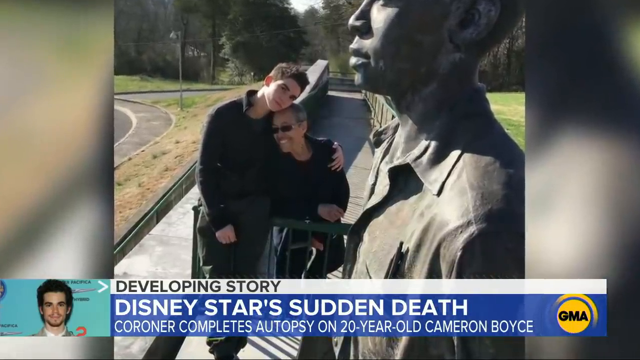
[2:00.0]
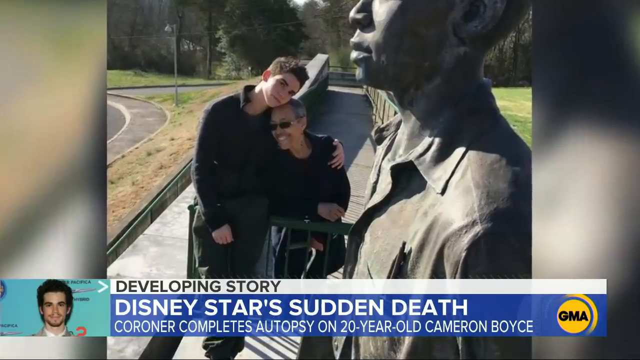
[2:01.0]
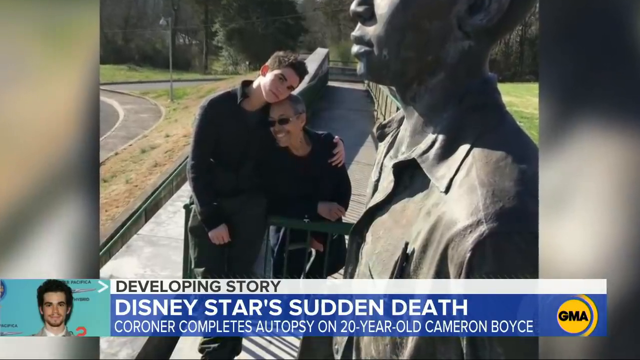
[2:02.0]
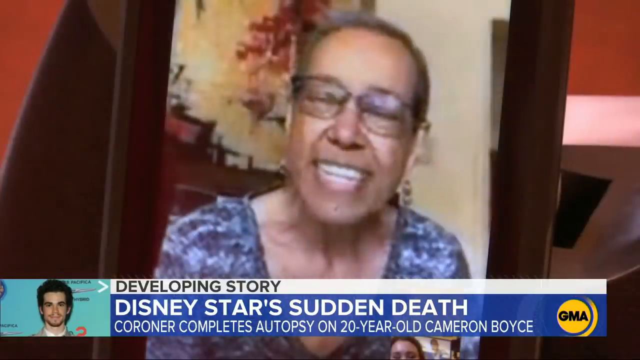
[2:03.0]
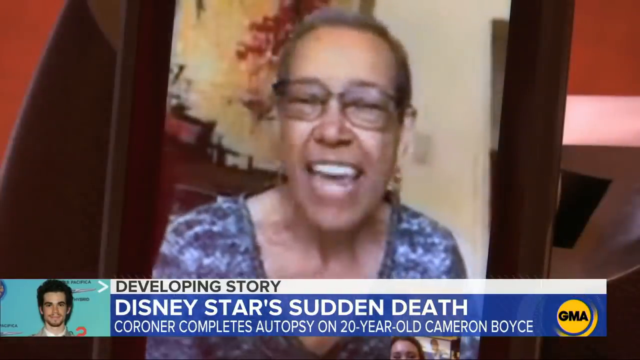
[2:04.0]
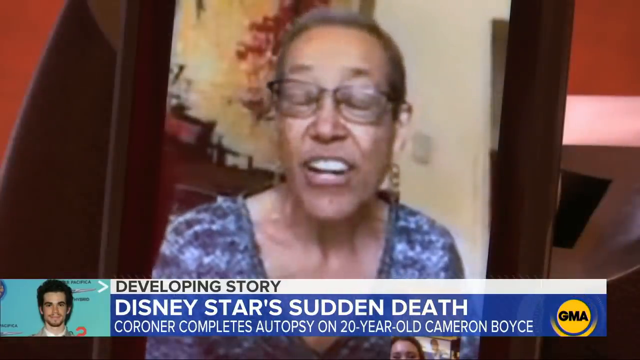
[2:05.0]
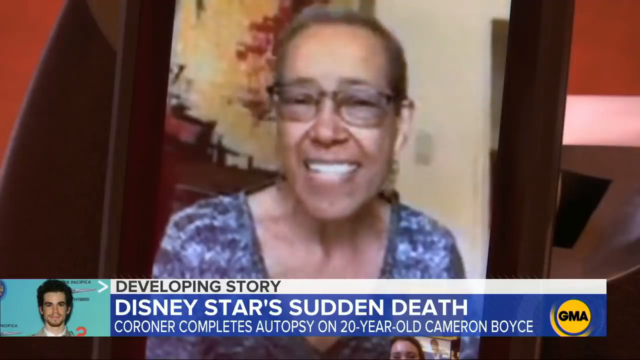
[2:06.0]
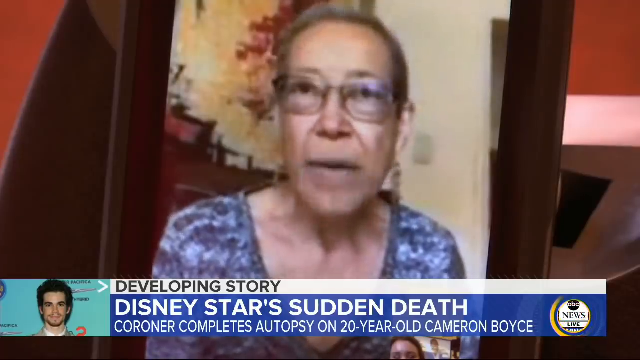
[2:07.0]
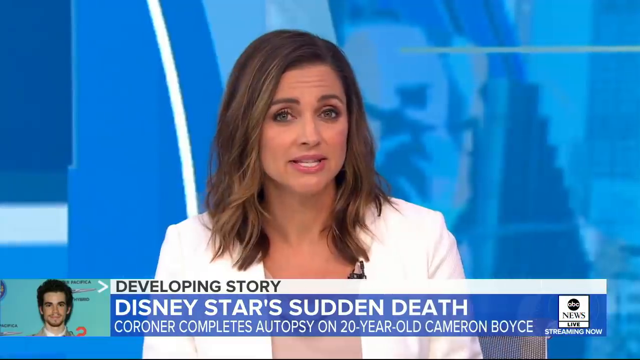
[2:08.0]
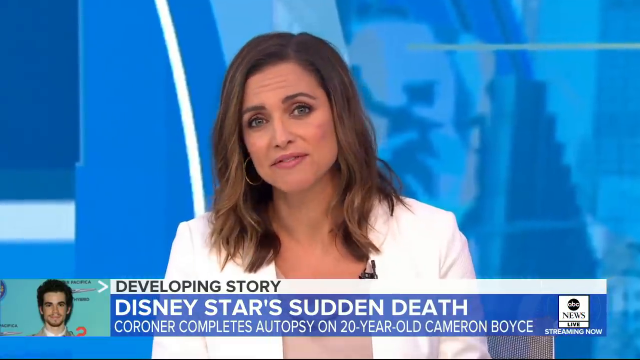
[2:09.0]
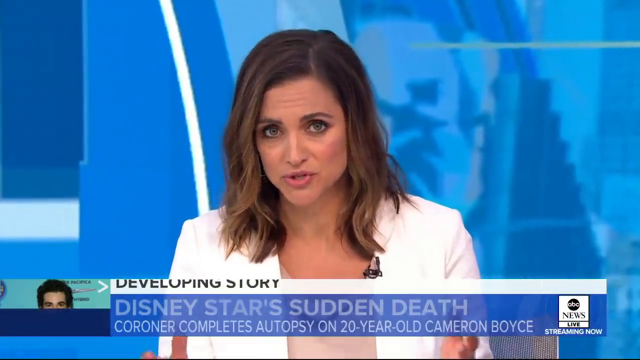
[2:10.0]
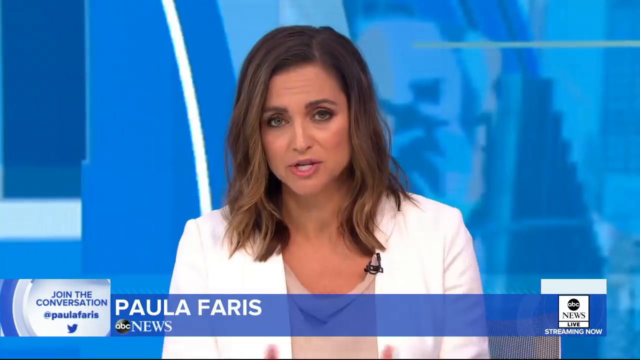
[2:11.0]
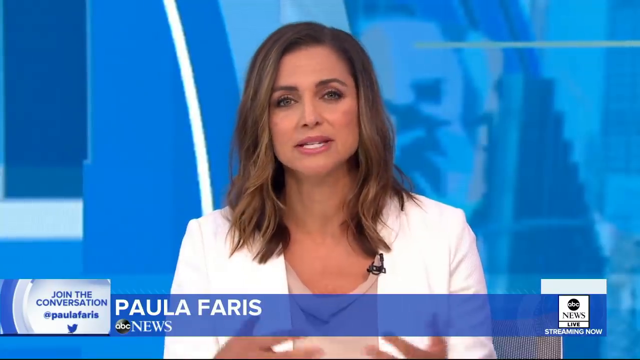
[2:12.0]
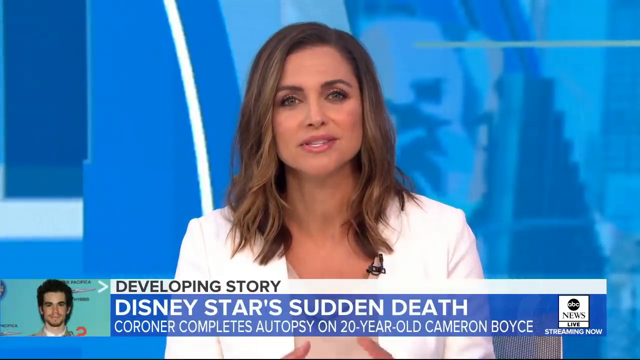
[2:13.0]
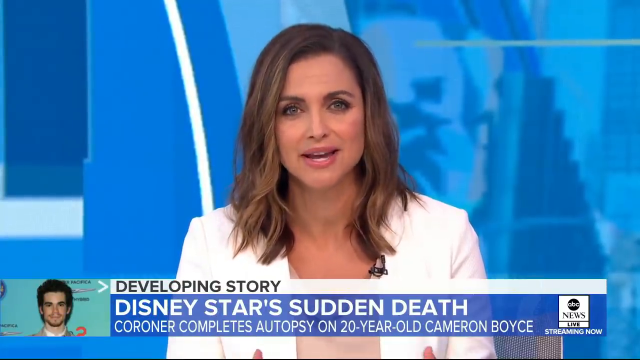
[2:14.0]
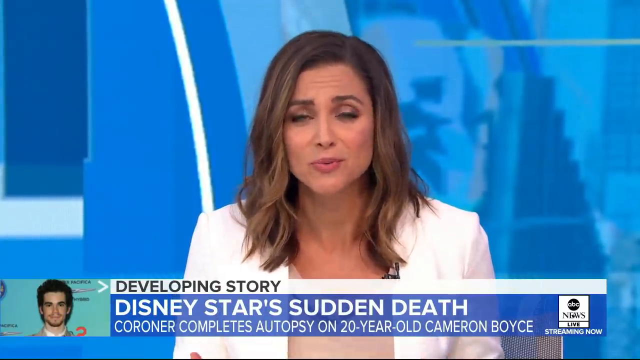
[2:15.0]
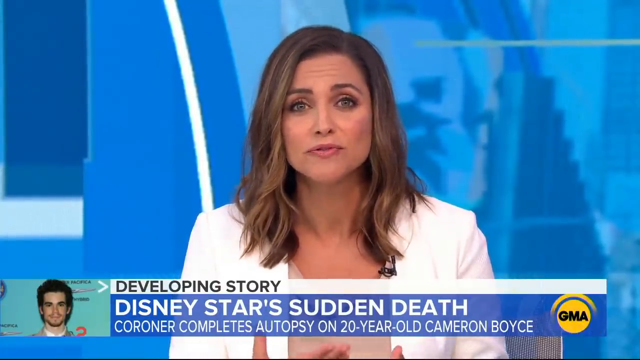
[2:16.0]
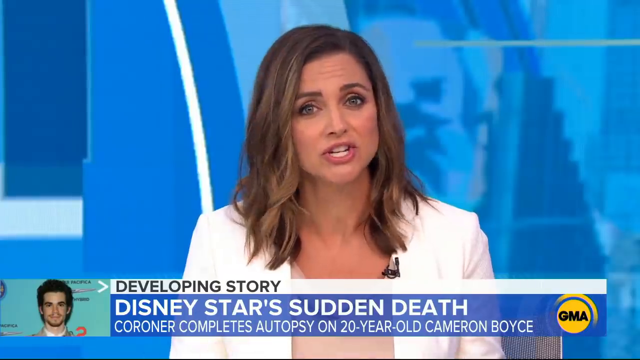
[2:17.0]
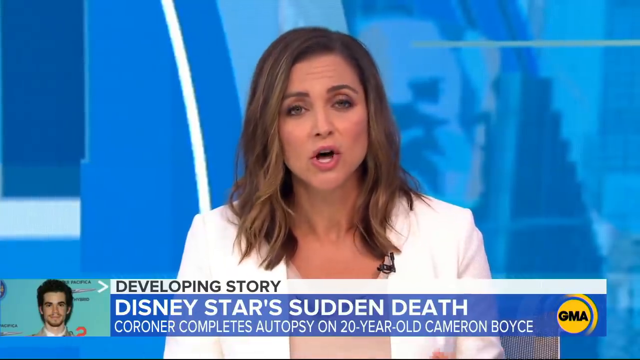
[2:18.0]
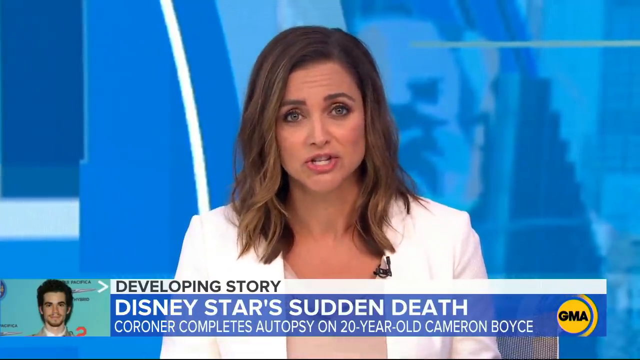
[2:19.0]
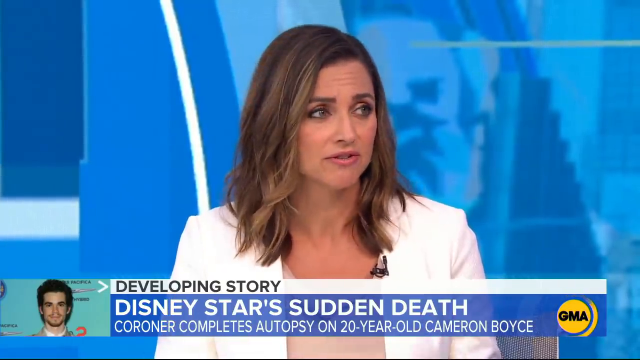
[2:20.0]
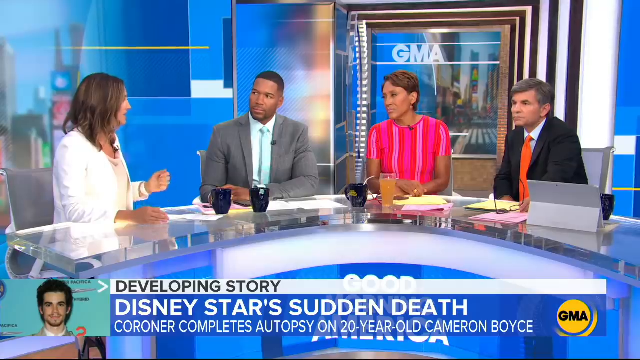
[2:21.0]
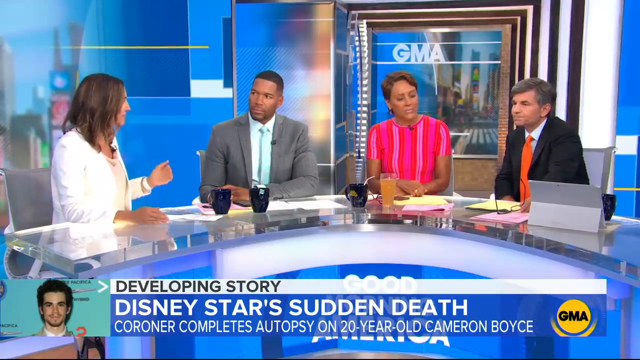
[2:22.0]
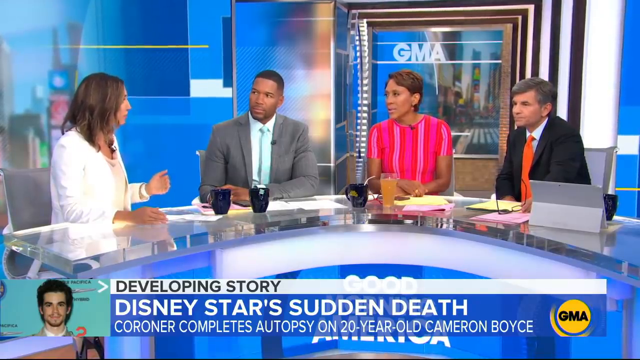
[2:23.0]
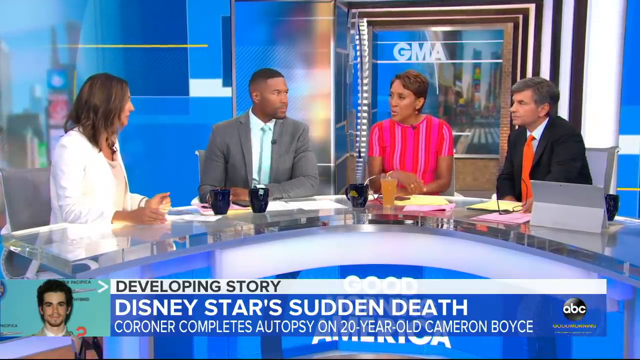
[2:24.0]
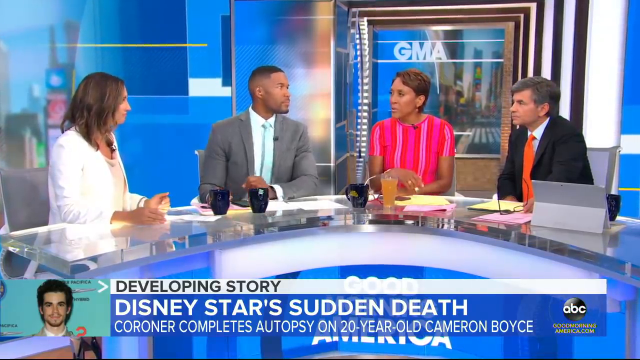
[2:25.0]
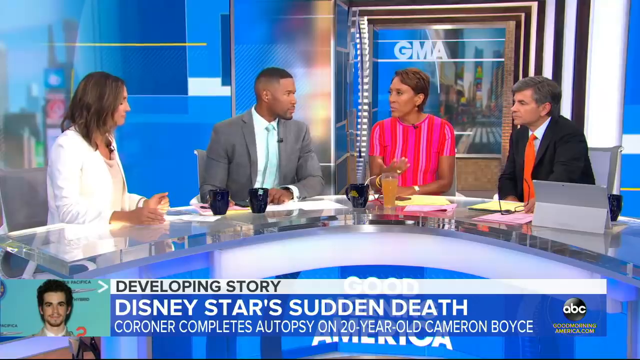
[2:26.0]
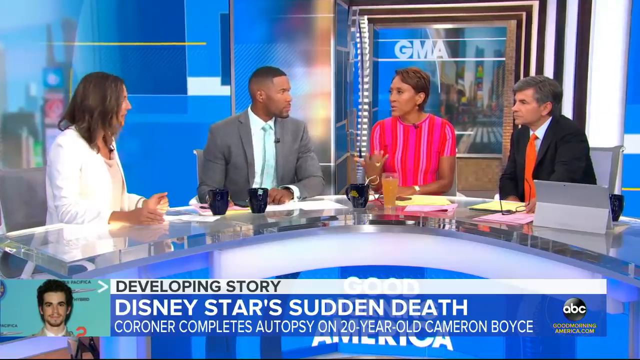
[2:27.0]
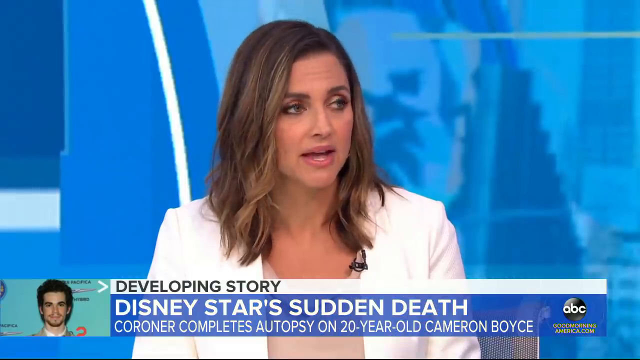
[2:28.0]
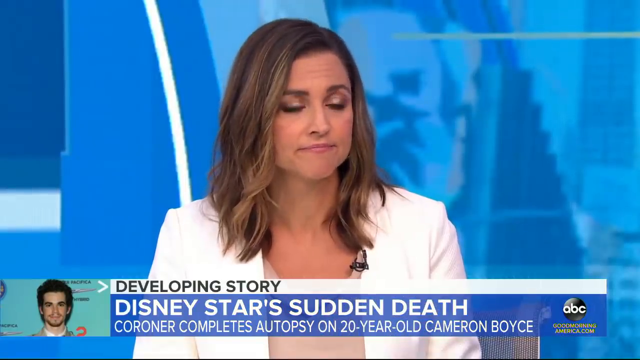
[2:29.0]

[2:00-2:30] The photo of his mom and Cameron Boyce continues, with Cameron Boyce holding onto his mom's left shoulder with his left arm while resting his head on her head. The video recording or call with the mom, or possibly the grandmother, is shown again; she smiles as she speaks. The next shot shows the news presenter speaking again, visible only from the chest up, in the white blazer and with long brown hair, speaking and staring directly into the camera. The banner at the bottom changes to read "Paula Faris" with "ABC News" beneath it, and at the left it reads "join the conversation at Paula Faris on Twitter". Her hands briefly come up as she speaks. The bottom banner changes back to the Disney stars sudden death subtitle with Cameron Boyce's picture on the left. Her face looks concerned as well as informed, staying neutral. The next shot reveals that Paula is sitting down as she turns to her left and speaks to the other three news presenters, who look at her and listen. She rests her hands on the table, gently tapping with her left hand. The woman in the pink and red shirt then speaks, flipping her right hand as she talks, and everyone directs their attention to her. The shot changes back to Paula's close-up; she seems to be nodding in agreement while looking at the other woman.